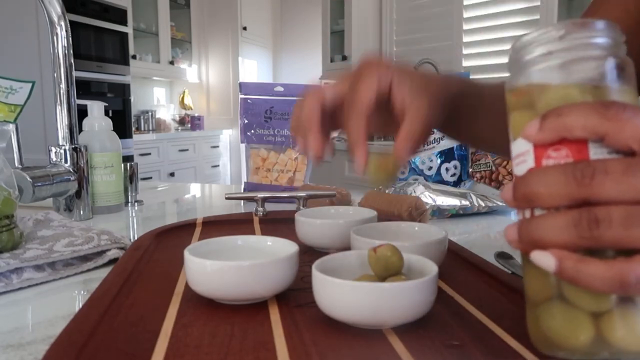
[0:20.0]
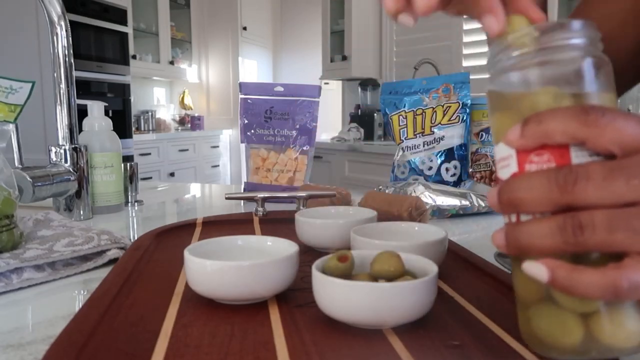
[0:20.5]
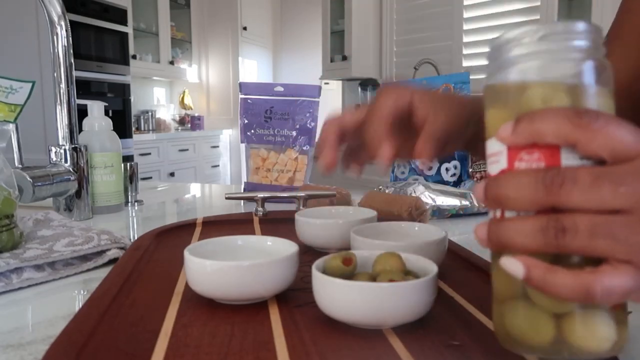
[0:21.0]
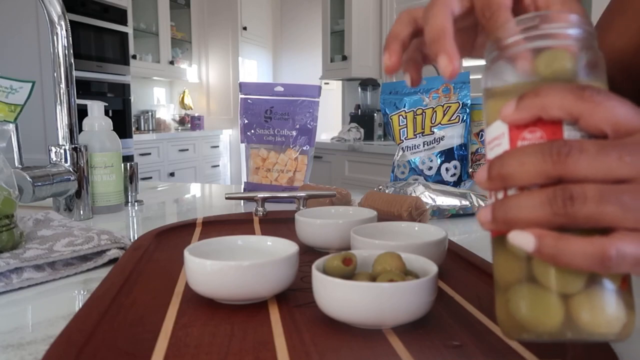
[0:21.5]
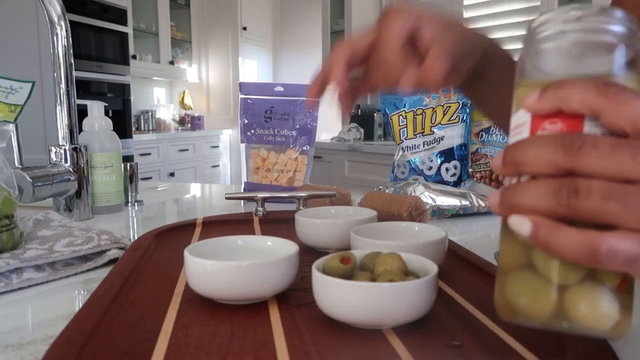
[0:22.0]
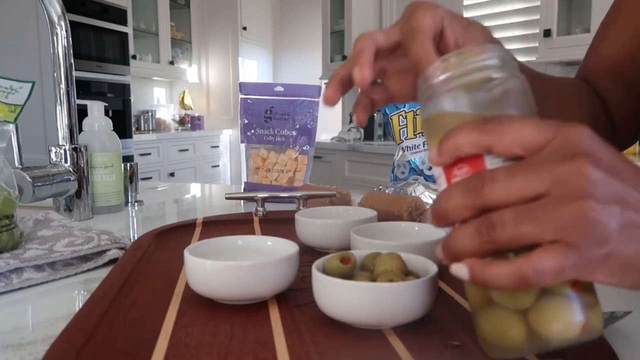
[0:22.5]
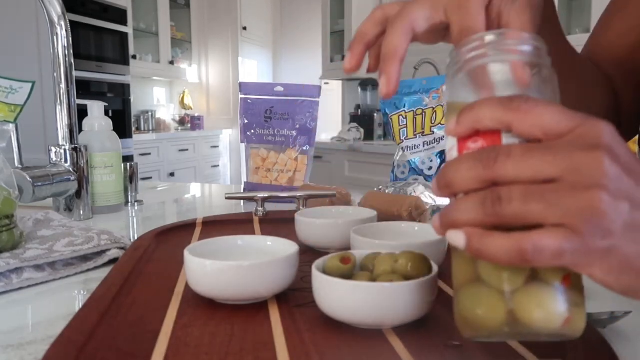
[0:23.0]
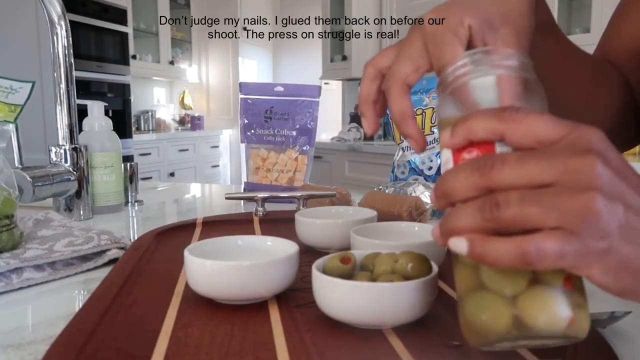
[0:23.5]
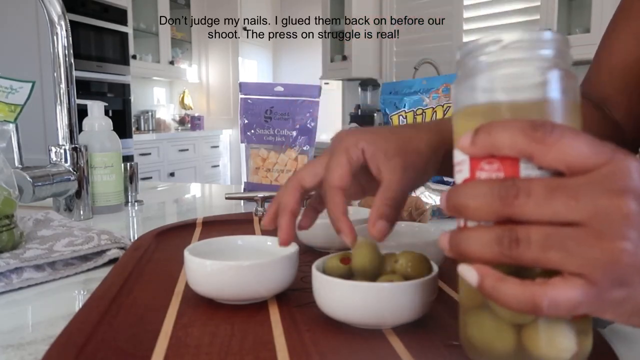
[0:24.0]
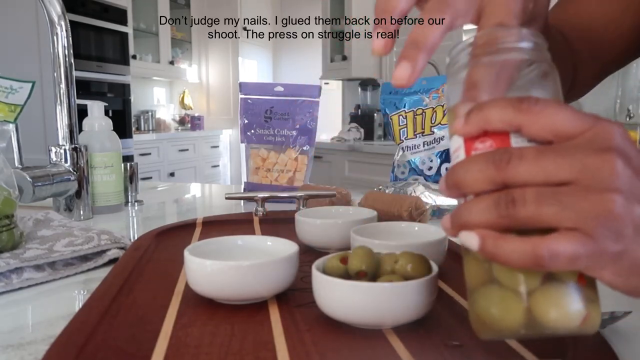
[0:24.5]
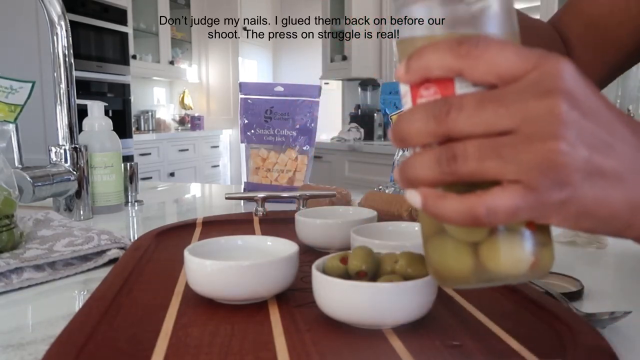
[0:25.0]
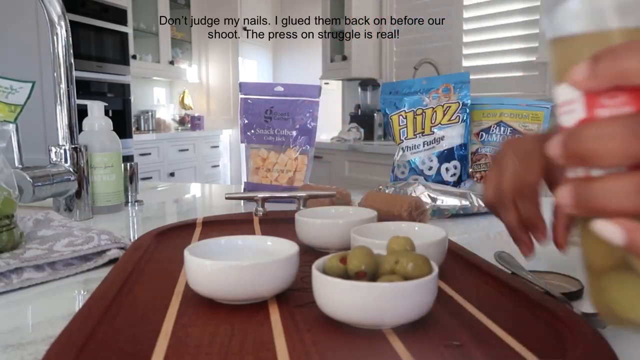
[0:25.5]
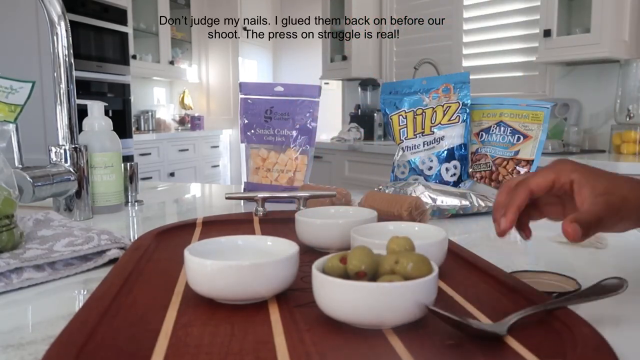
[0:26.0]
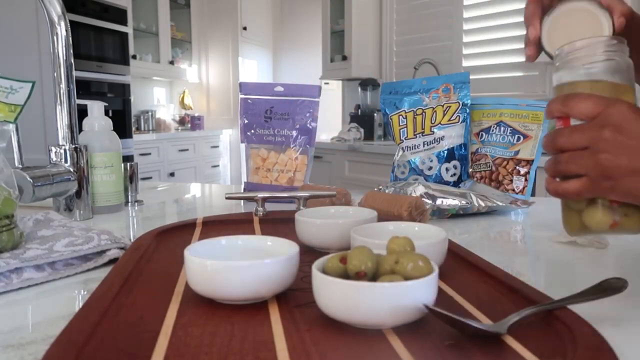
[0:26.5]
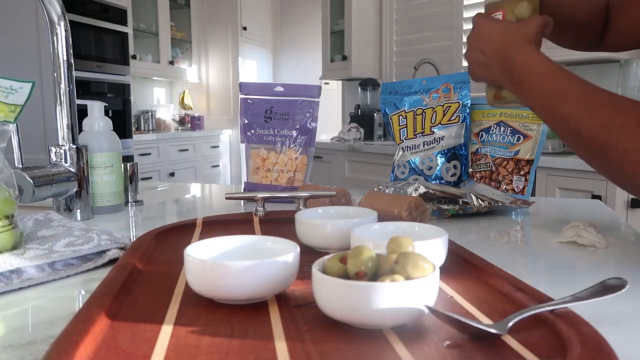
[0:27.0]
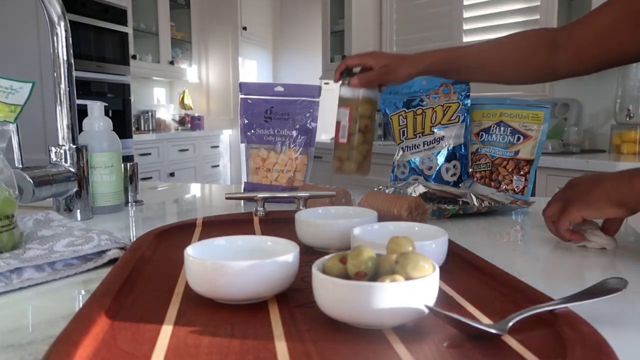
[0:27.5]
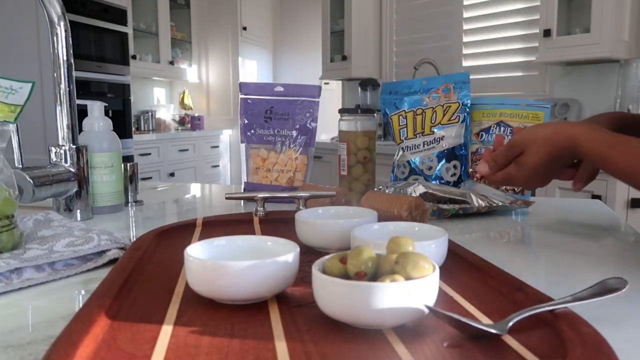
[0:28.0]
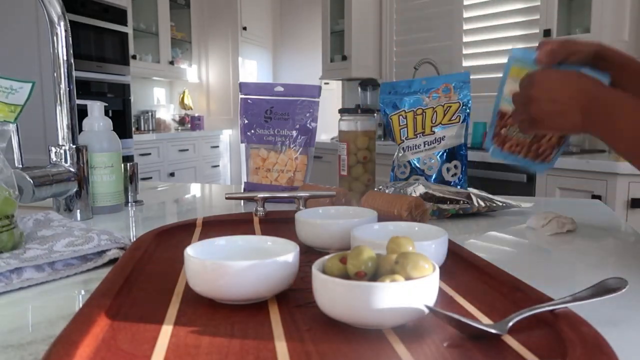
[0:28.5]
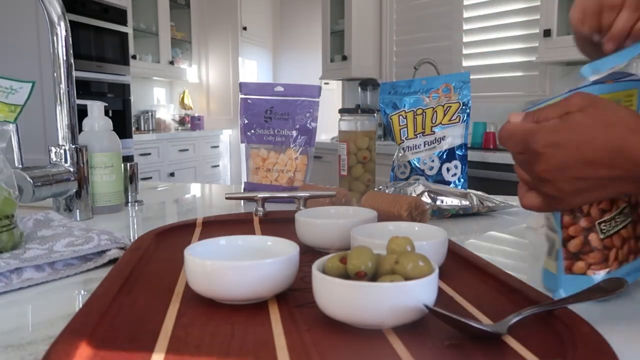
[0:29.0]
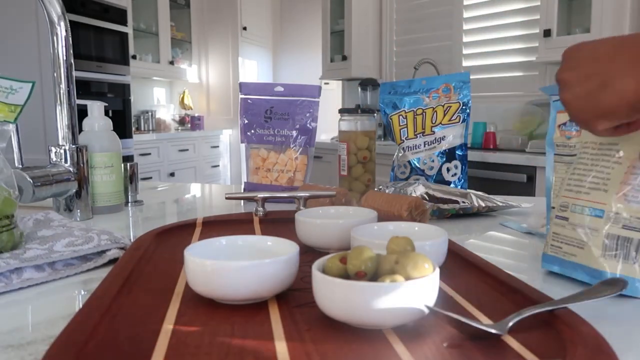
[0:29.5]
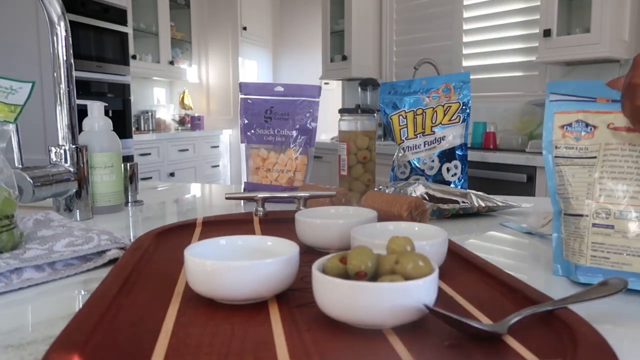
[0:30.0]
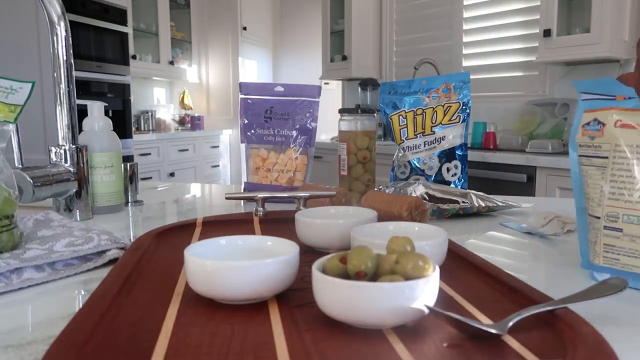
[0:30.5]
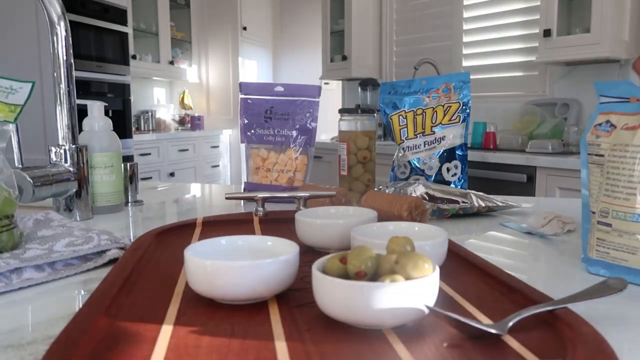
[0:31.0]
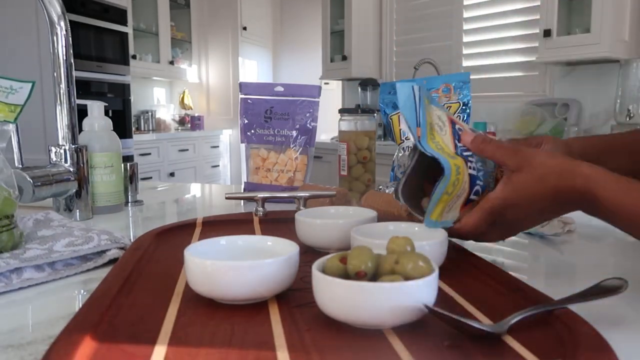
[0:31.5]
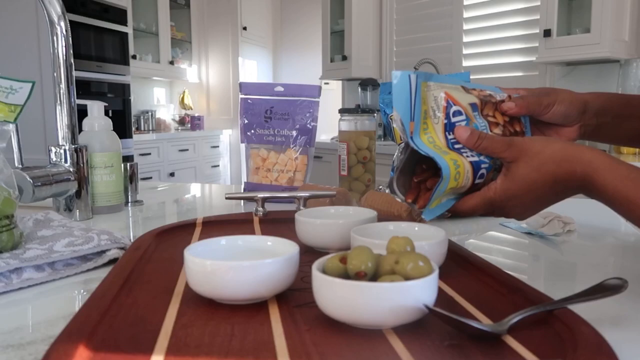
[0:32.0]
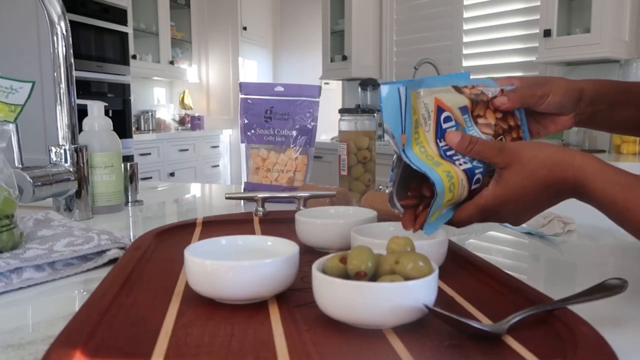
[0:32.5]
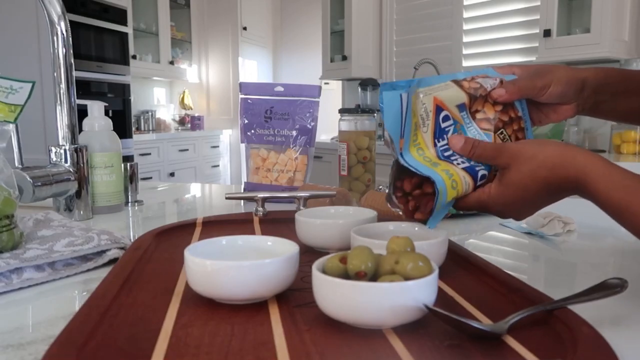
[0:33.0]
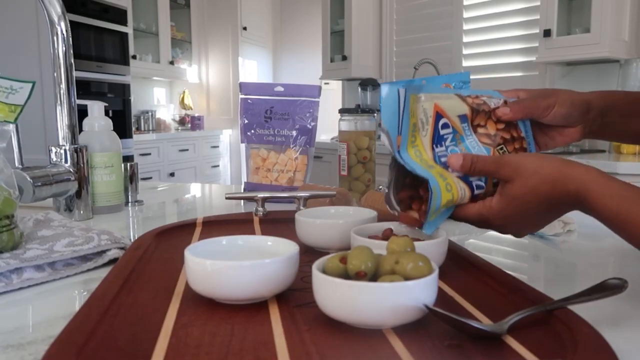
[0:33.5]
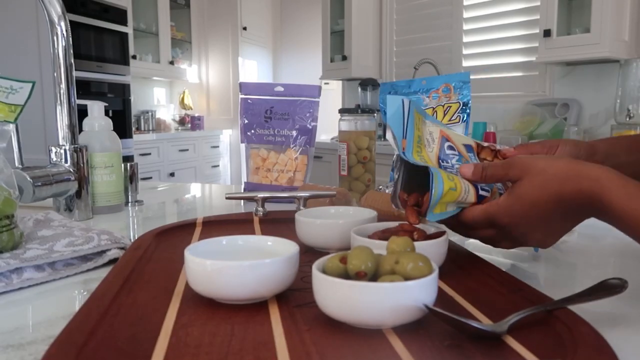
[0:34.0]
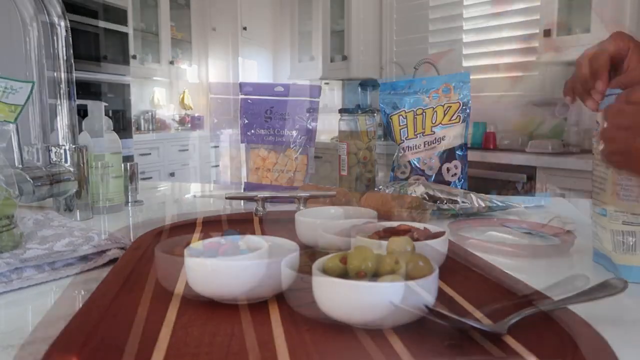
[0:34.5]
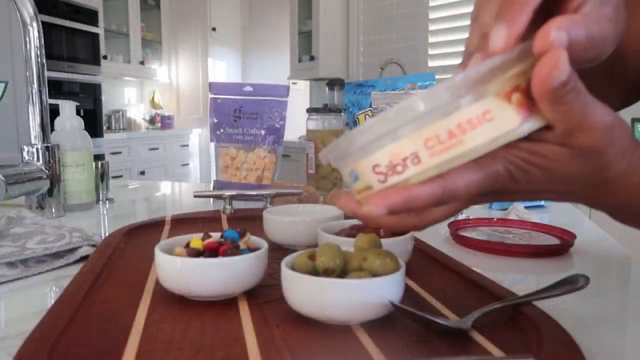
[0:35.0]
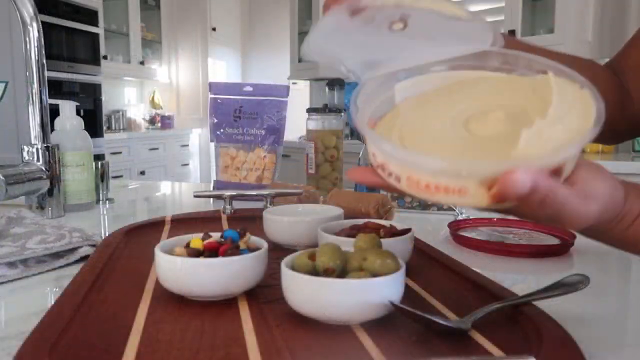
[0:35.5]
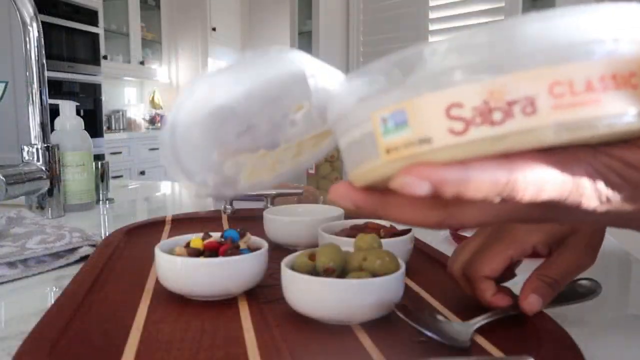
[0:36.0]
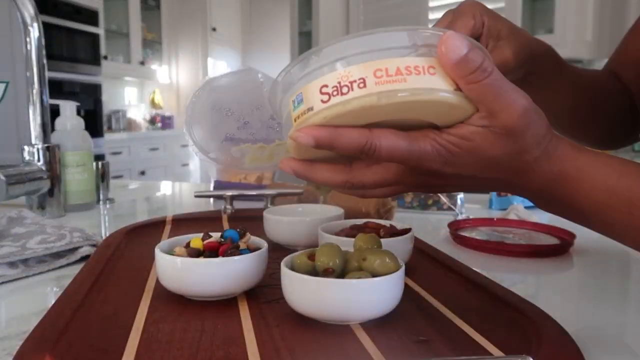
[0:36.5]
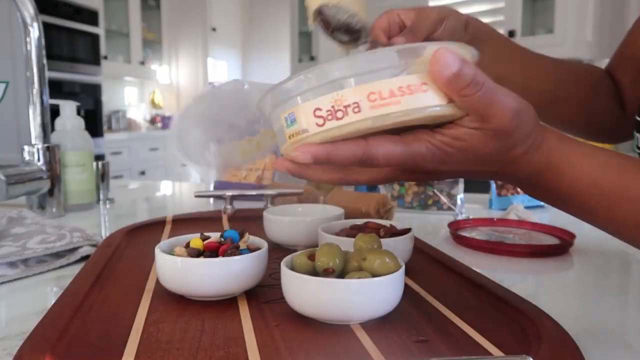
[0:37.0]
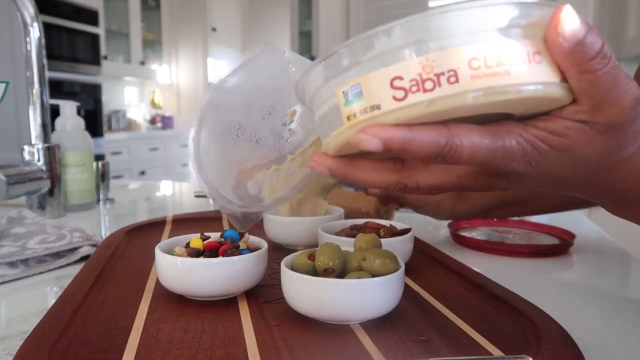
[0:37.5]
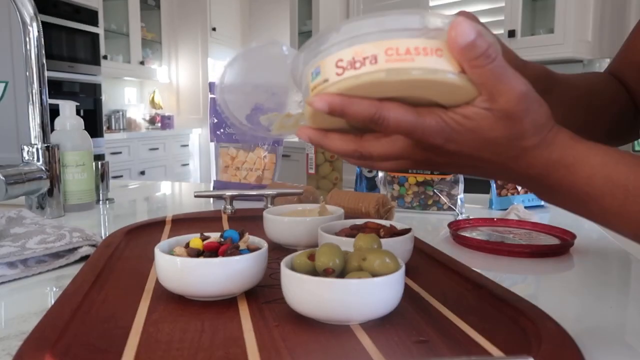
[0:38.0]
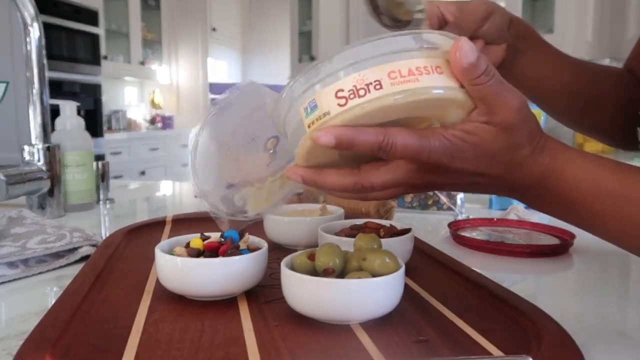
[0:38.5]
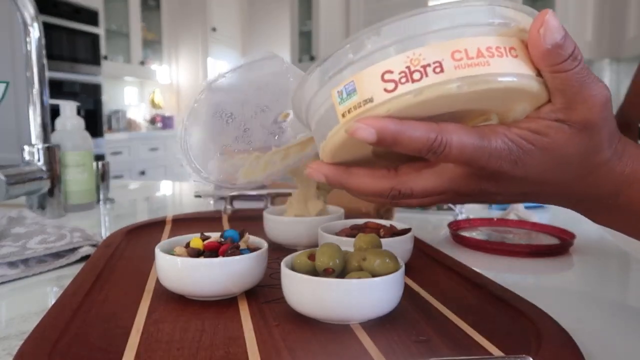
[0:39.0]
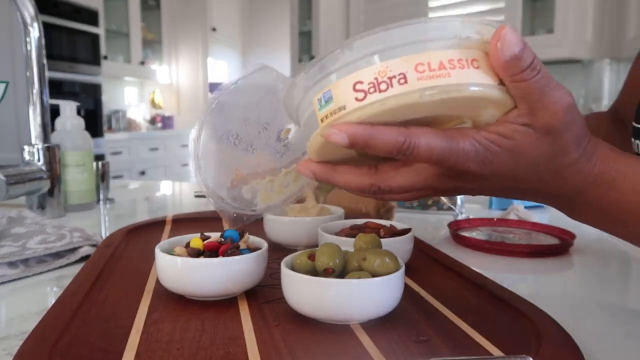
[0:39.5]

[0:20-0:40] A spoon is on the table, along with four bowl containers. A lady has one nail painted white. She carries a bottle of olives and puts the olives into a salad bowl, then wipes her hand. She takes another packet, which has walnuts in it, and puts them into a container. She then takes another packet, apparently the dip for what she is preparing. Text reads "don't judge my nails. I glued them myself." The kitchen has a white cupboard, items for sanitizing or hand washing, a blind, a blender and a juice jar. The lady is showing how to prepare the cheese board.